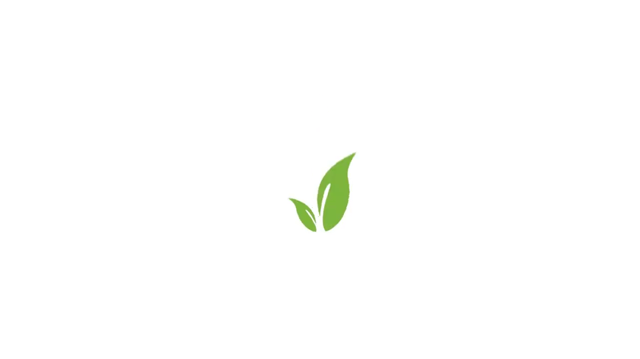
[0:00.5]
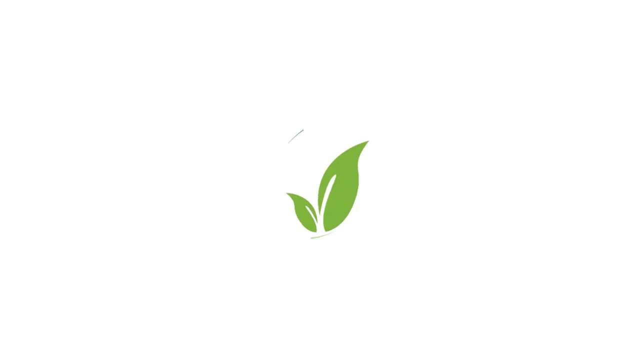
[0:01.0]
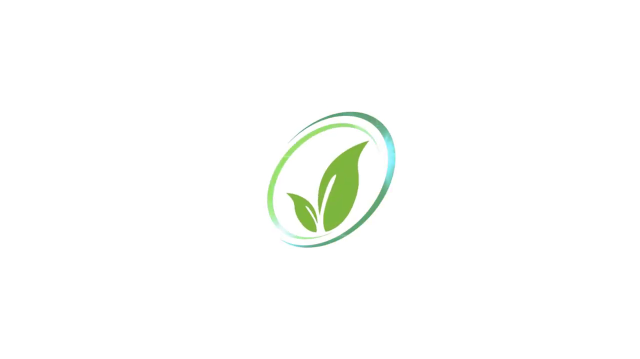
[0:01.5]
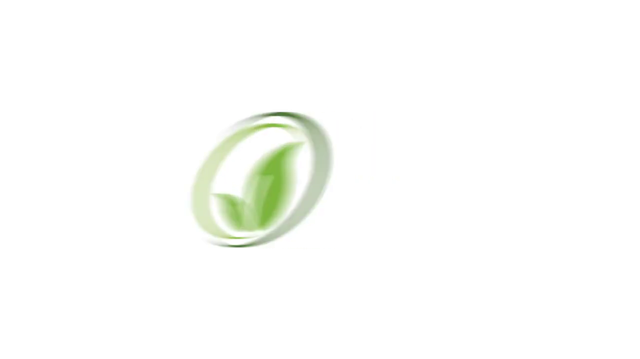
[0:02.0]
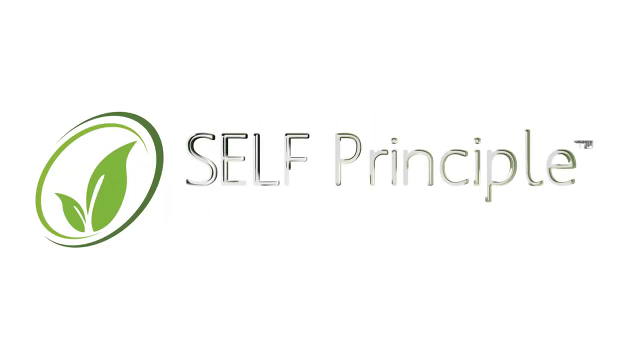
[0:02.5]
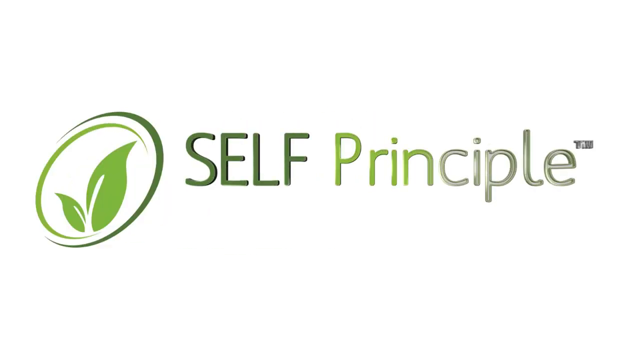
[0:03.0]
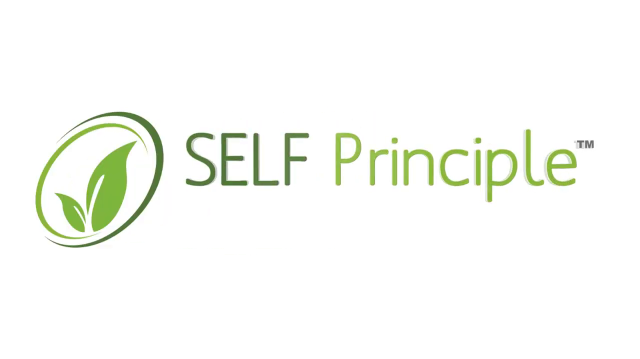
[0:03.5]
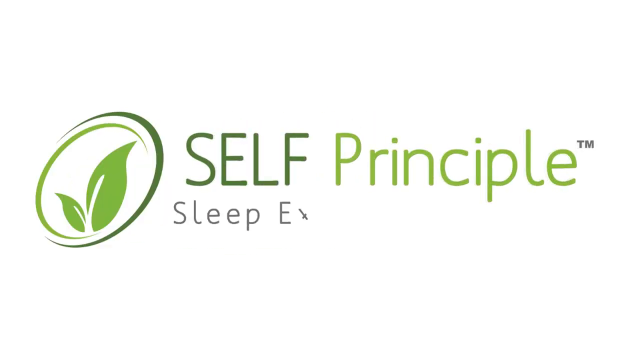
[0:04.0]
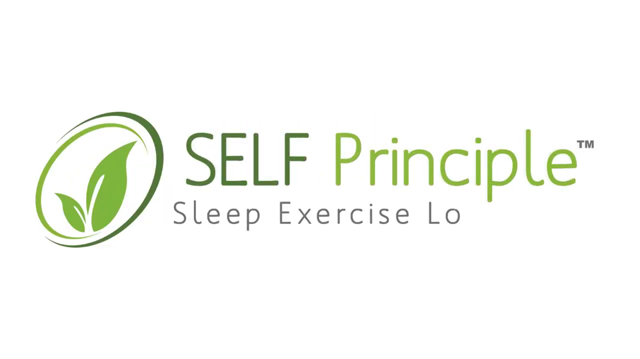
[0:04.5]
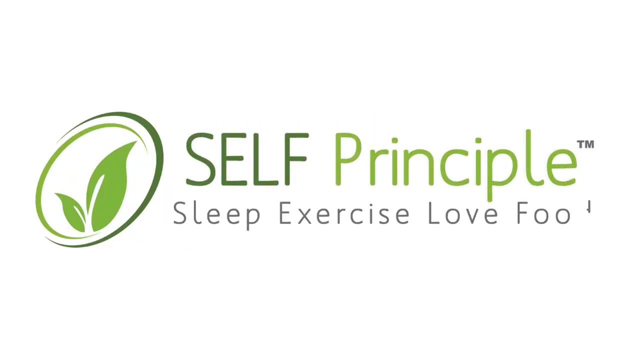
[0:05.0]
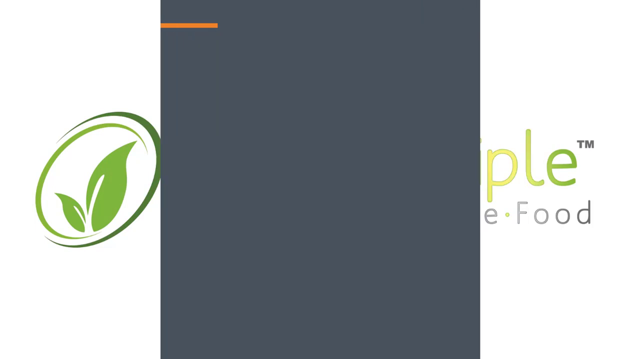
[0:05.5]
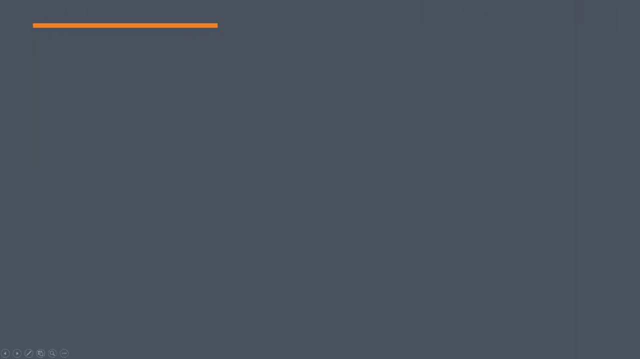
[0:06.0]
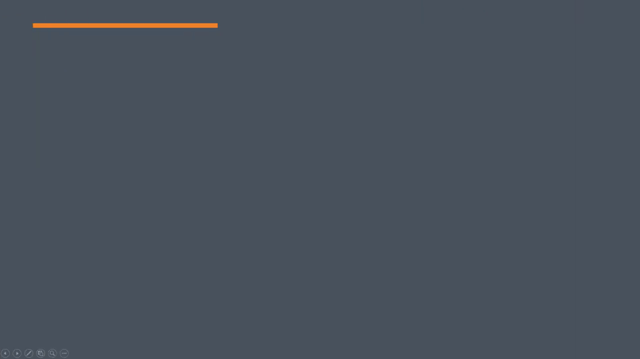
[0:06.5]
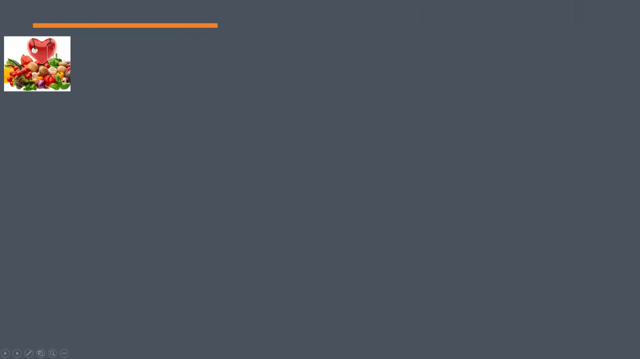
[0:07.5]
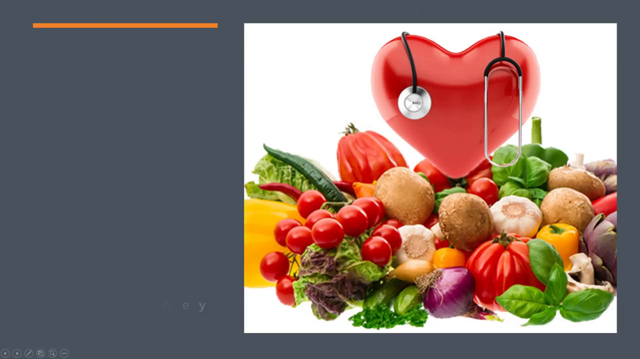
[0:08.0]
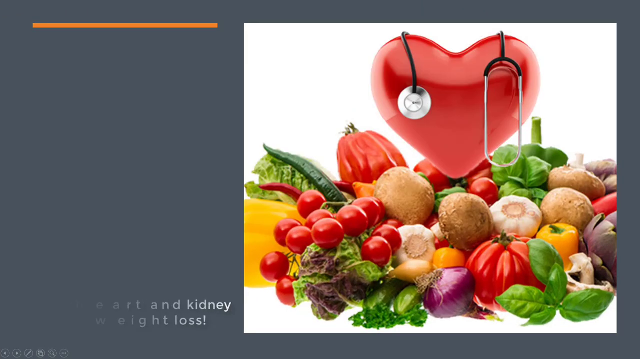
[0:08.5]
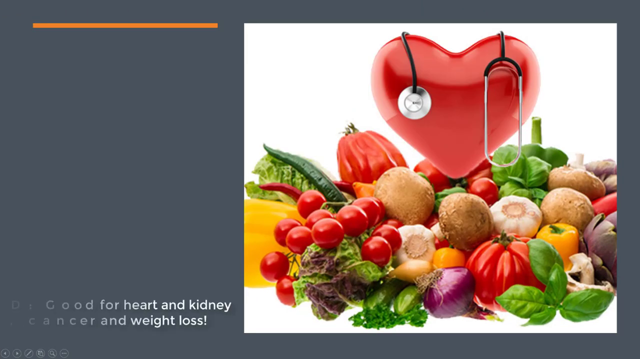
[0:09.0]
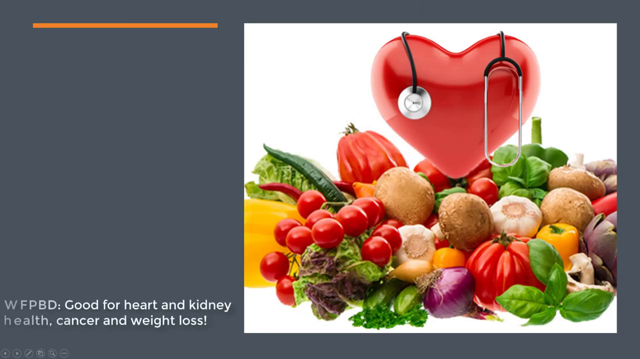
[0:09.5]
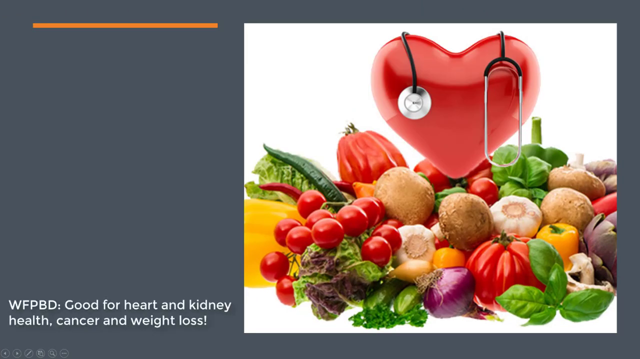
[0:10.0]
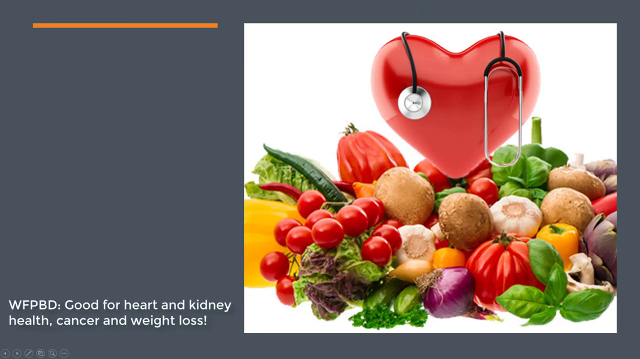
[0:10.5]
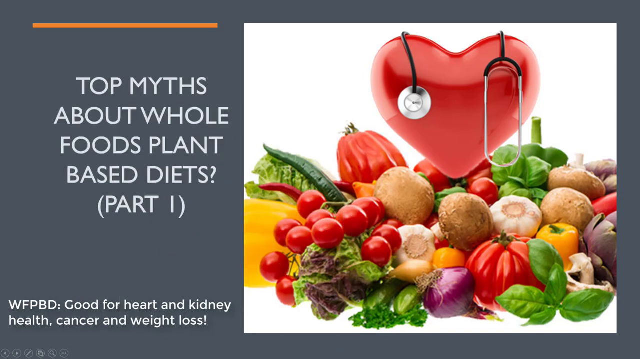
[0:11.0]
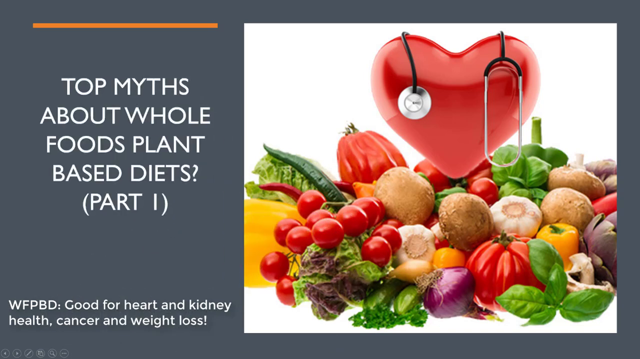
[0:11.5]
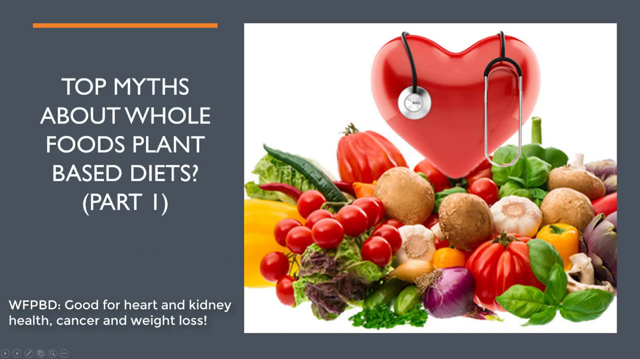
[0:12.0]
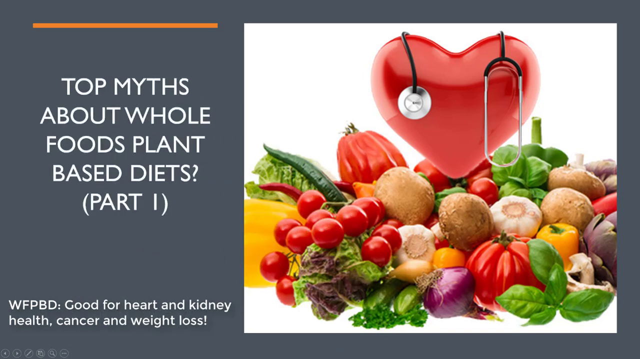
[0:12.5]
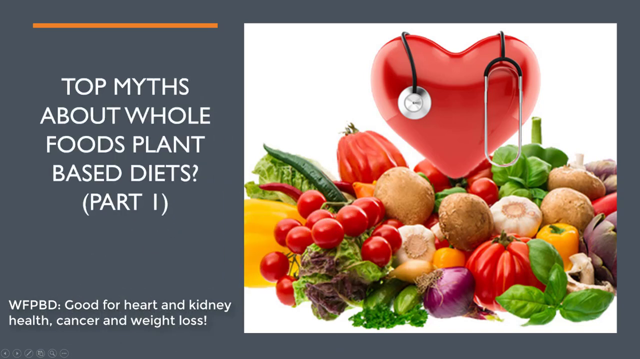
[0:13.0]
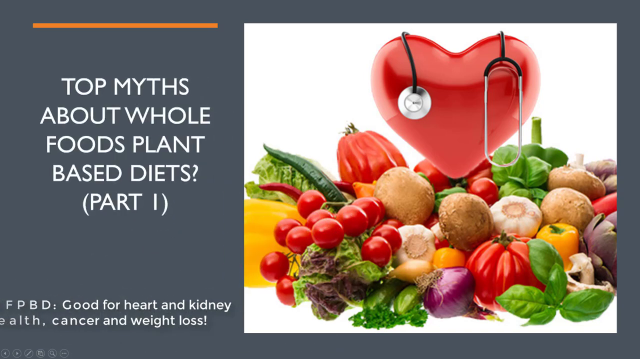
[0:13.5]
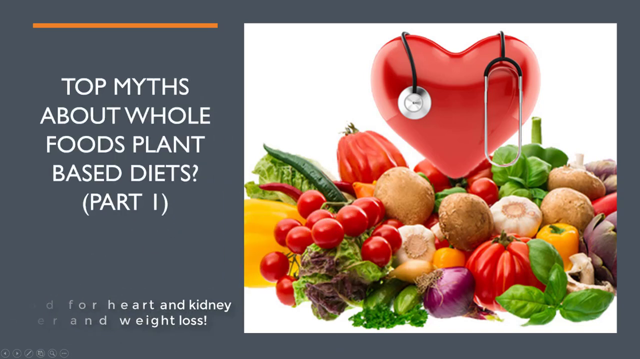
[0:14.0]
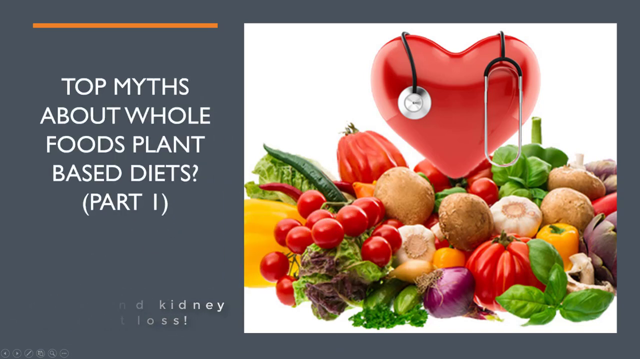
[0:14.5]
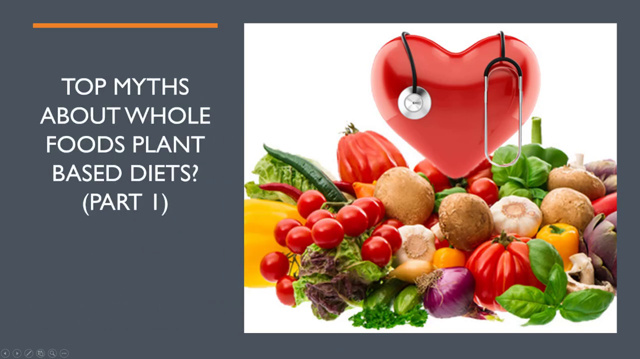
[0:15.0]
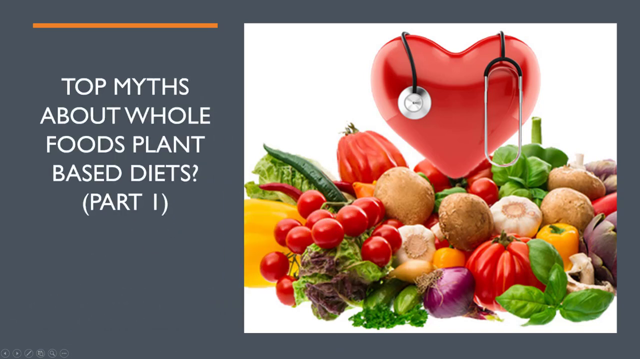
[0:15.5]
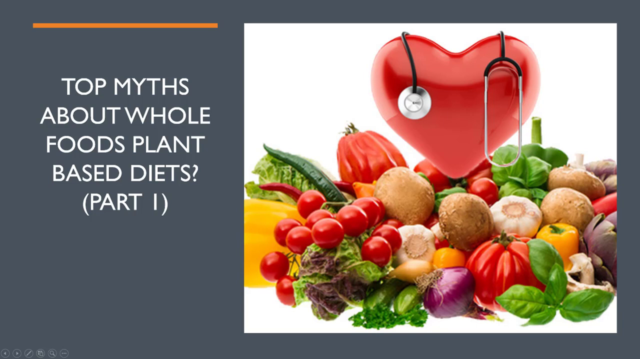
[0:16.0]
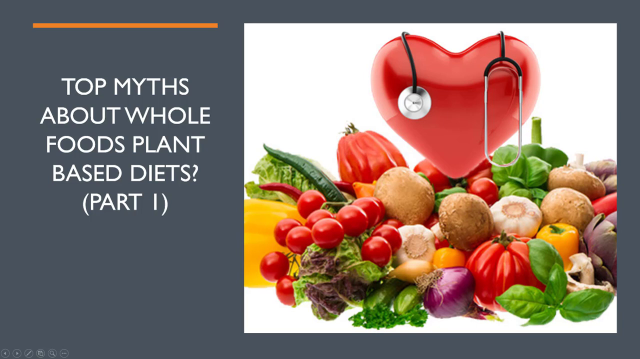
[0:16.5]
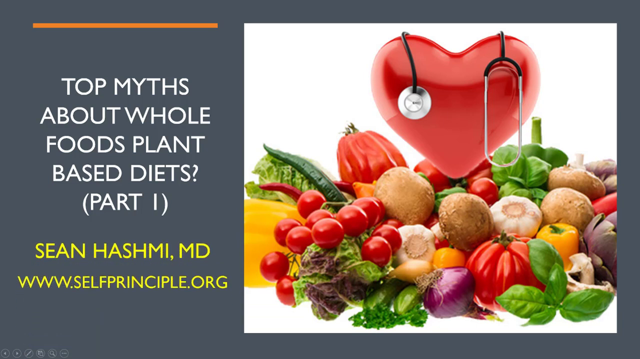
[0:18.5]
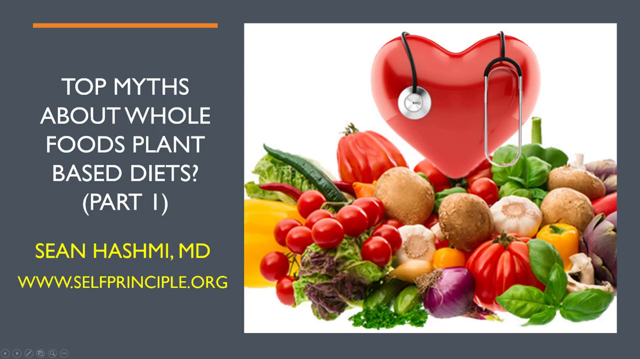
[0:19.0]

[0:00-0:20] The video begins with a simple white background on which a water droplet animation appears and transforms into a stylistic green and blue leaf logo. The logo moves off to the left side to make room for the title, "Self Principle," with a trademark beside it. After a few moments, a slogan is revealed underneath in grey: "Sleep, Exercise, Love, Food." A grey-blue transition sequence follows, with an orange rectangle near the upper left side, and then an animation shows a picture of various fruits and vegetables with a heart representation on top and a stethoscope placed over it. Near the bottom left corner the text reads "WFPBD, Good for Heart and Kidney Health, Cancer and Weight Loss." An additional bullet point appears that reads "top myths about whole foods, plant-based diets, part one."